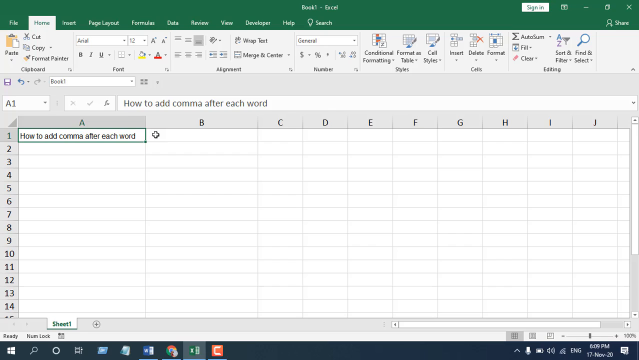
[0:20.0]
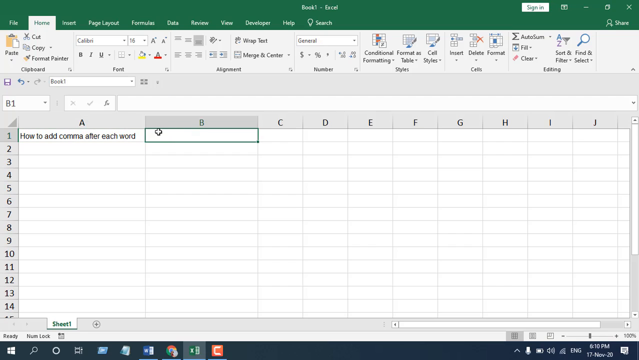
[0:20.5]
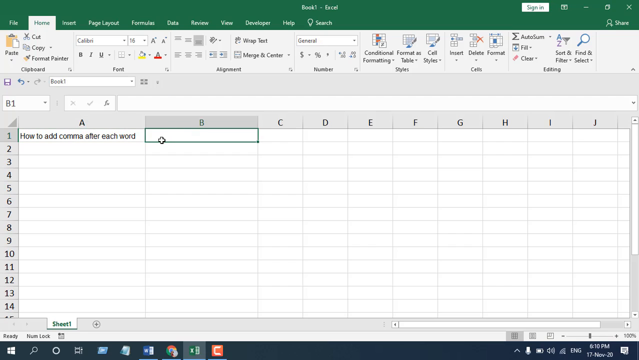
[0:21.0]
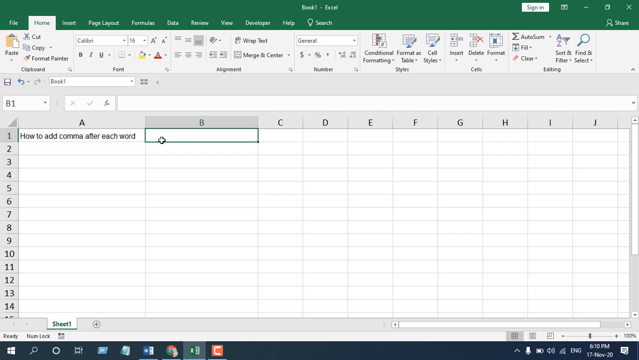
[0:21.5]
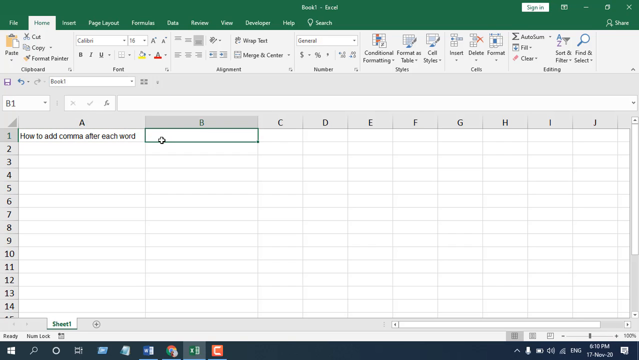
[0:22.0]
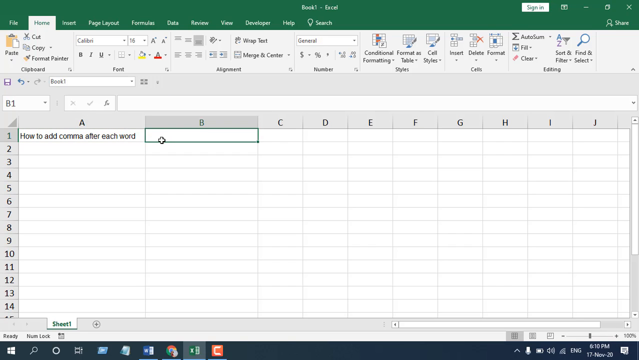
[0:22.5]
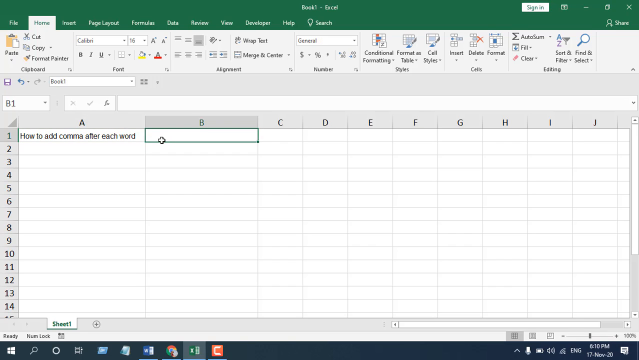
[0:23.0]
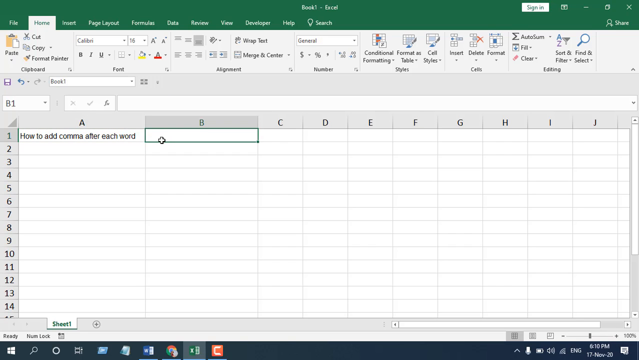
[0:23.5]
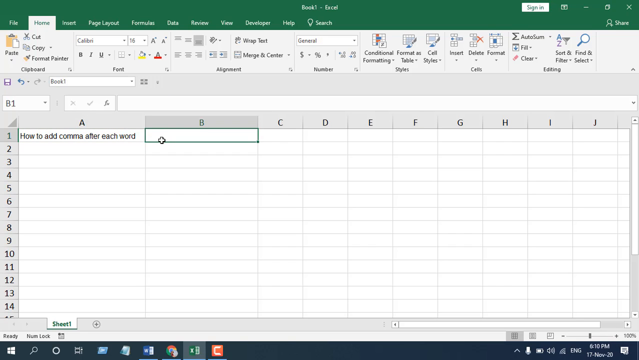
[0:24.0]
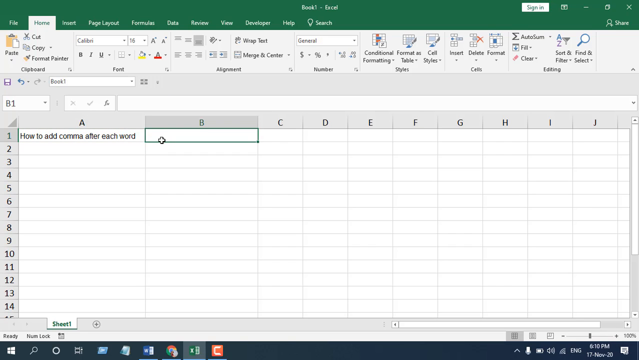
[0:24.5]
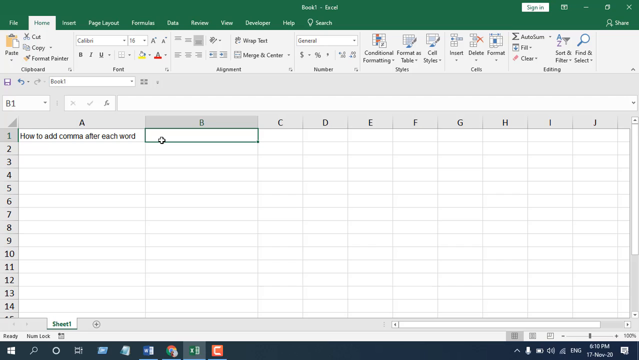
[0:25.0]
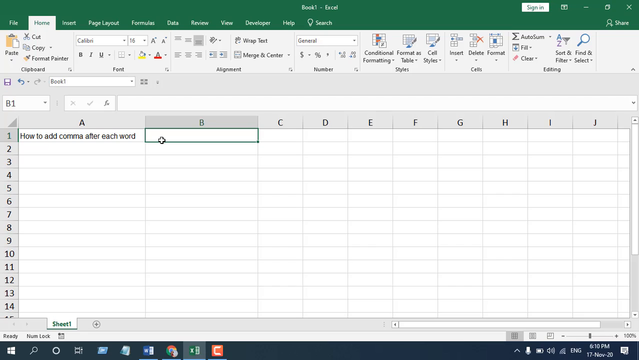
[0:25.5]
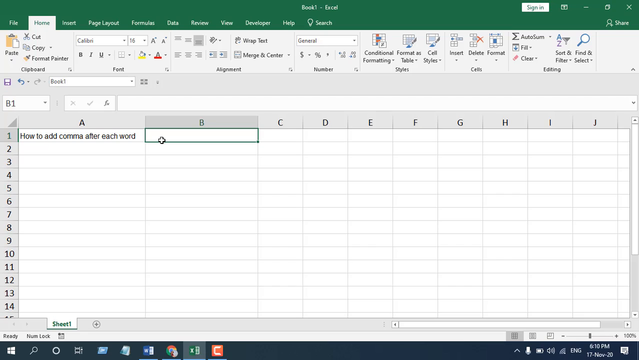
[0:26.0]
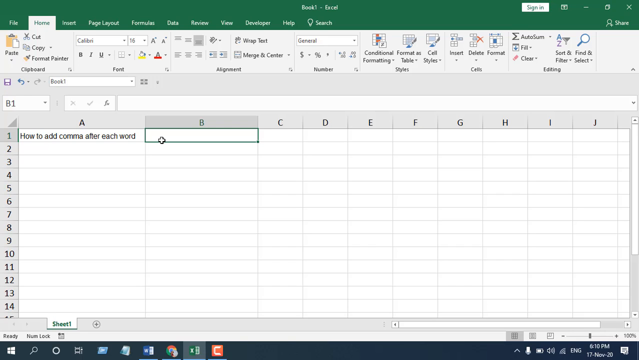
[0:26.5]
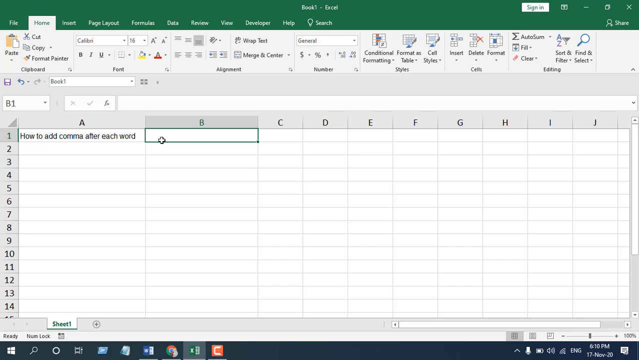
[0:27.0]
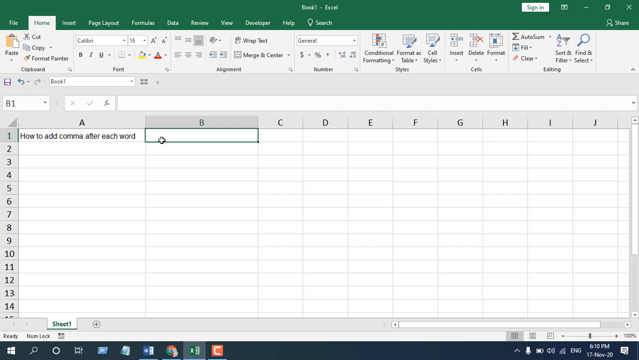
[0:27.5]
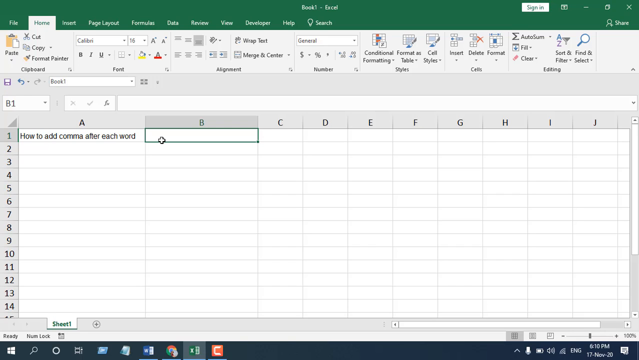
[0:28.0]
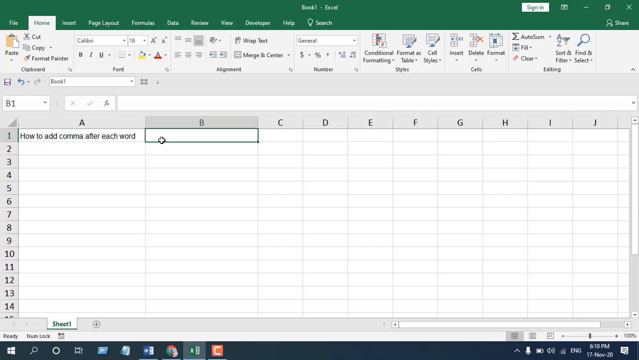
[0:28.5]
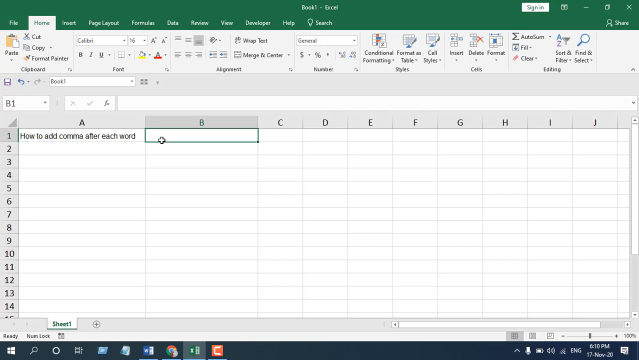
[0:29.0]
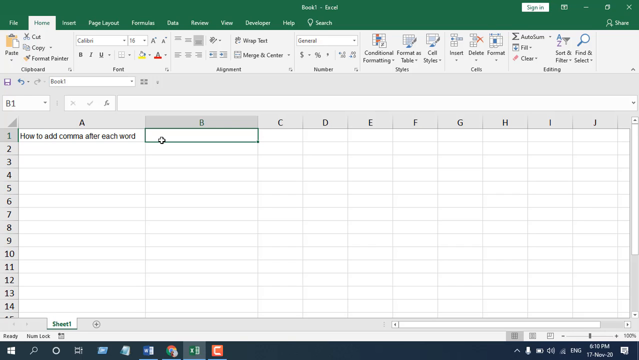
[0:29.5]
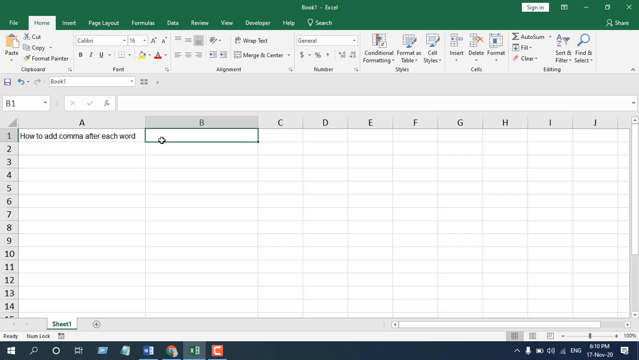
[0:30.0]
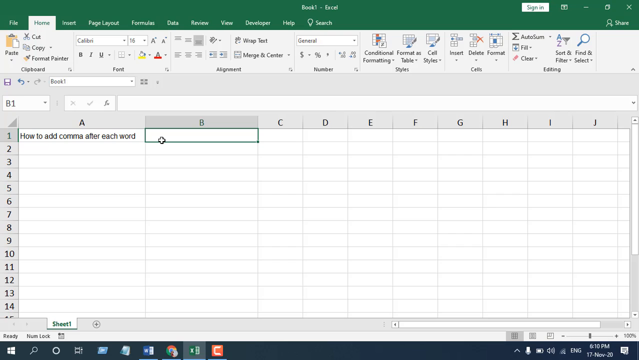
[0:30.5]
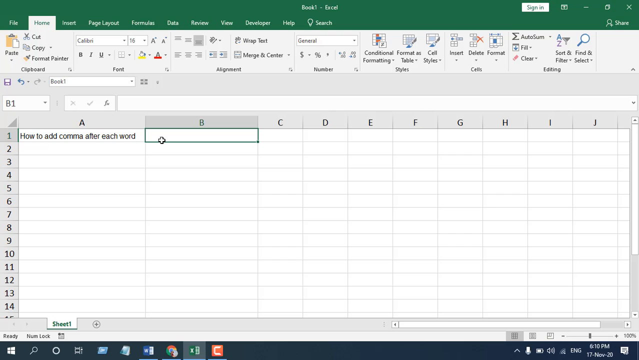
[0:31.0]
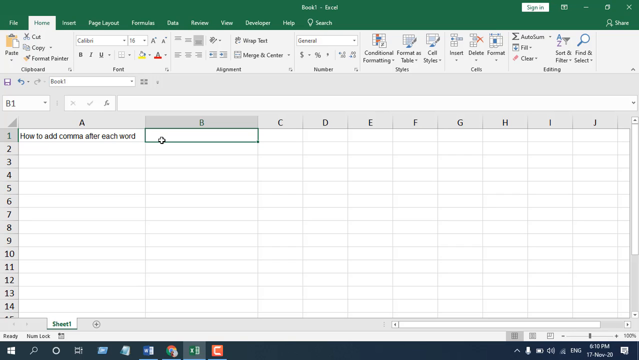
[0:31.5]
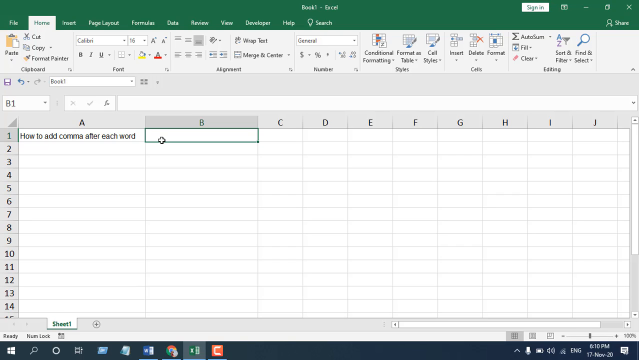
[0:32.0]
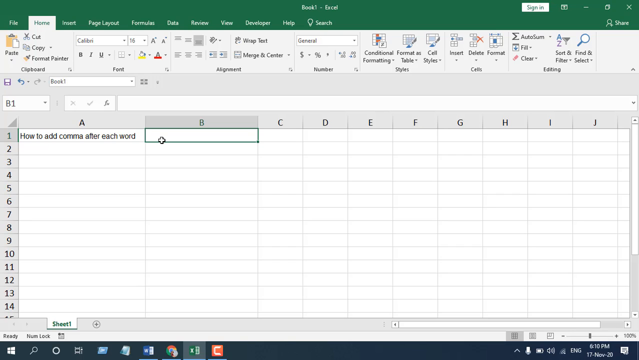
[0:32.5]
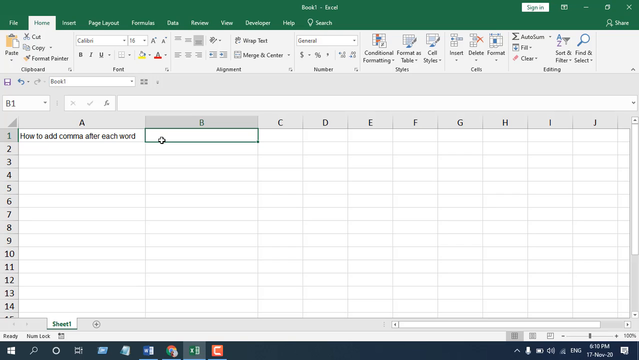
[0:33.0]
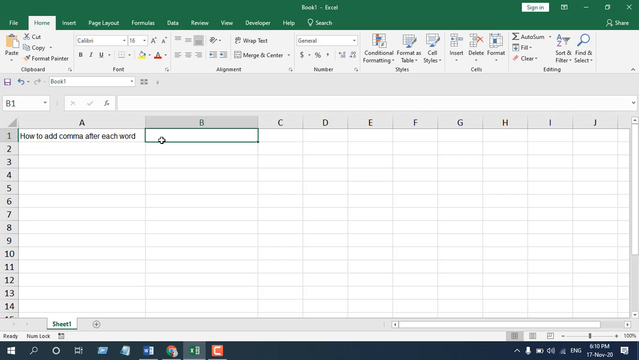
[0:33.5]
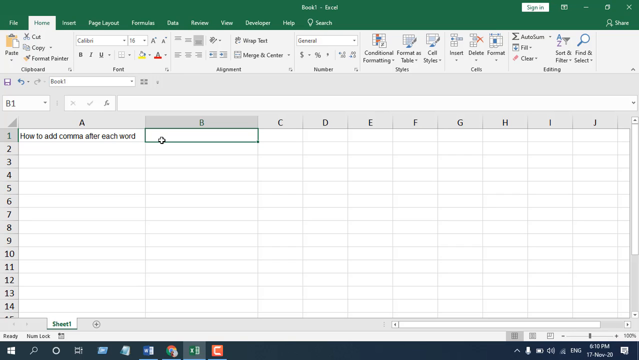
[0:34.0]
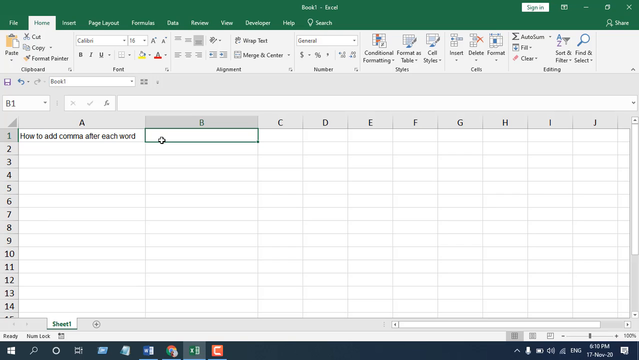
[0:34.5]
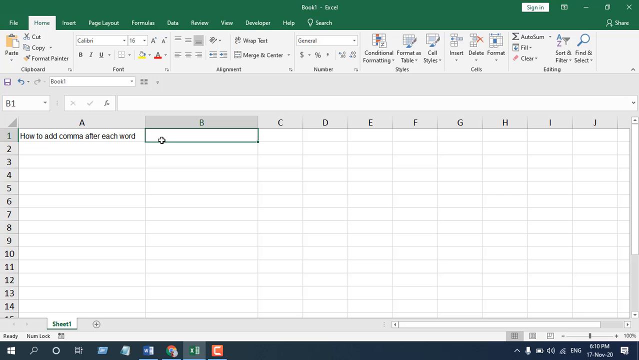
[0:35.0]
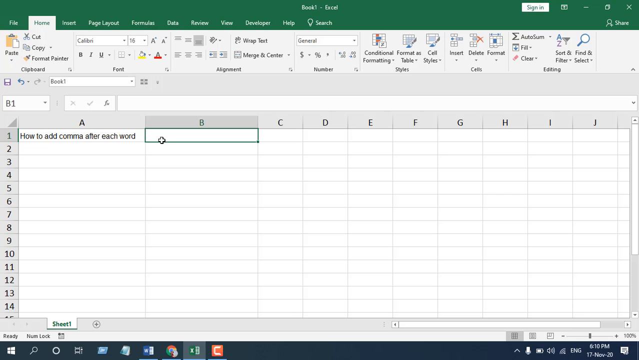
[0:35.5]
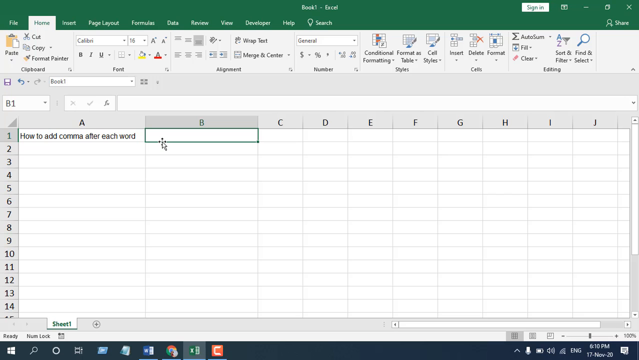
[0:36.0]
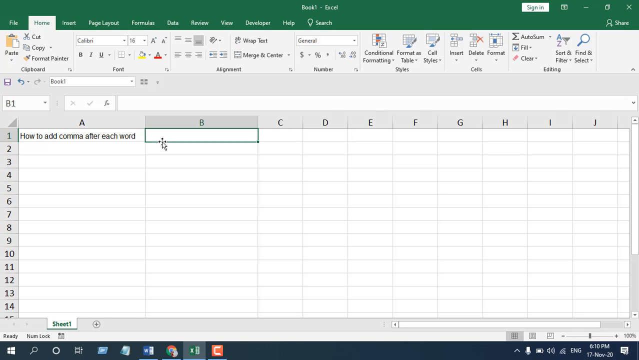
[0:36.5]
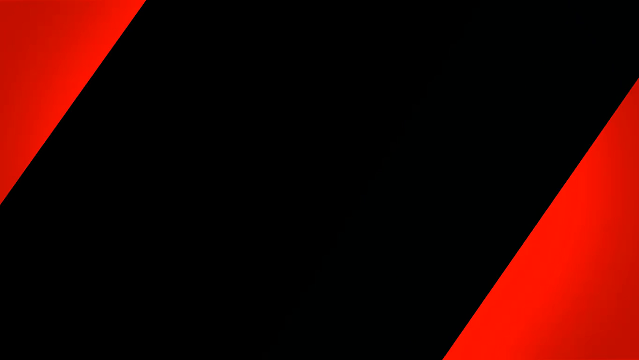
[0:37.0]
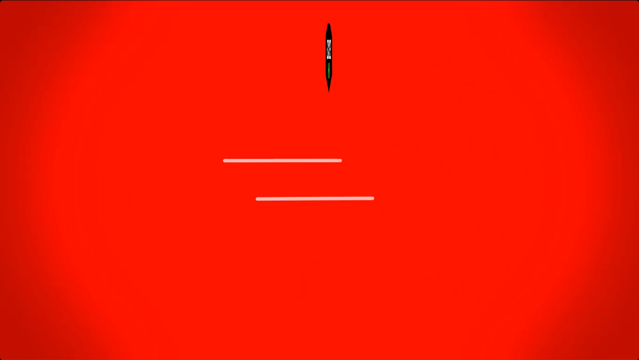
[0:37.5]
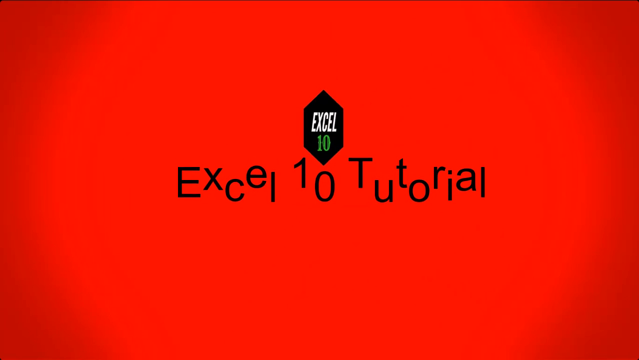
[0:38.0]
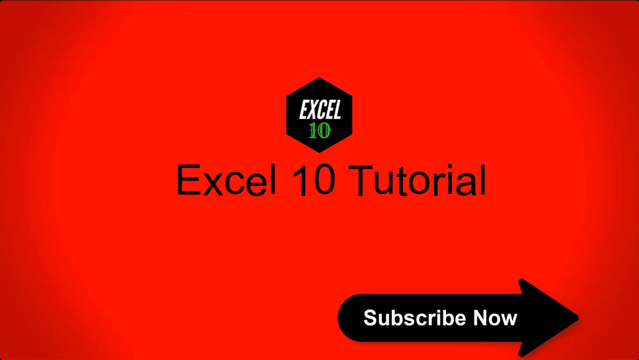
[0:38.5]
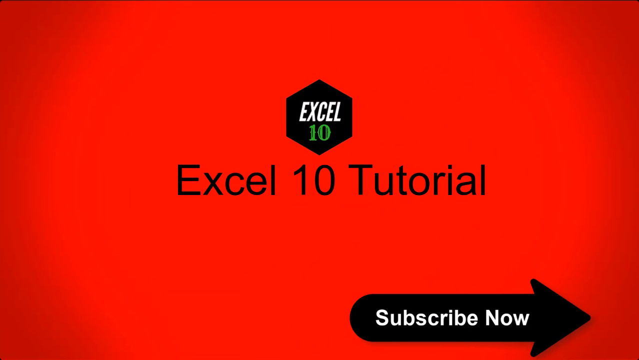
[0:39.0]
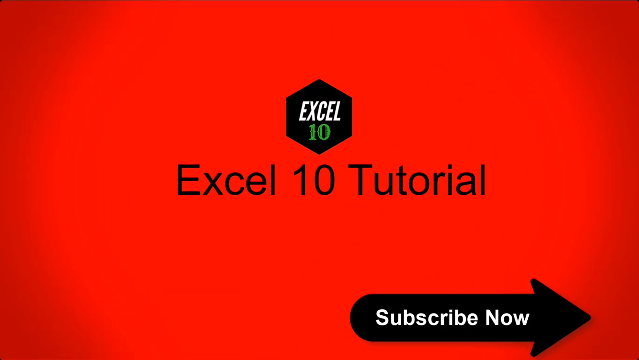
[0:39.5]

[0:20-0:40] An Excel spreadsheet marked "book T" is open on the Home tab. It is not signed in, as "sign in" appears at the top. There is only one entry in the spreadsheet, "how to add comma after each word", in row one, column A. That cell is already highlighted, and the mouse pointer beside it shows a plus symbol. The user moves over to column B and highlights the empty cell in the same row, row one. For a brief second, an advertisement pops up to upgrade to "Windows Excel 10".